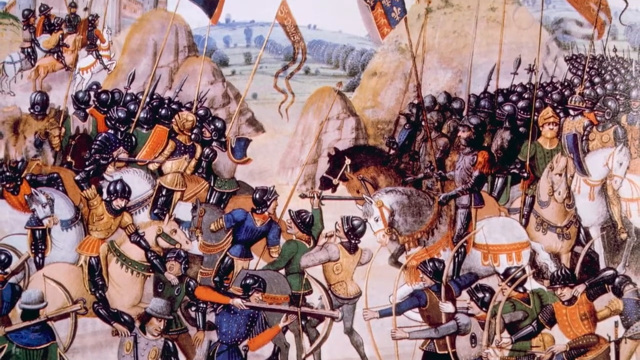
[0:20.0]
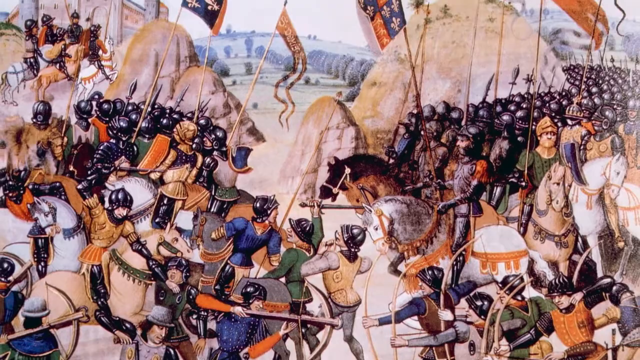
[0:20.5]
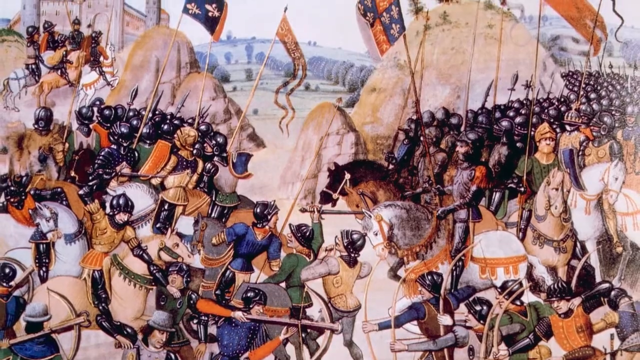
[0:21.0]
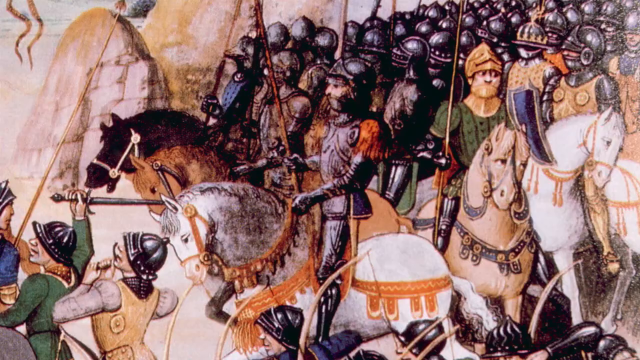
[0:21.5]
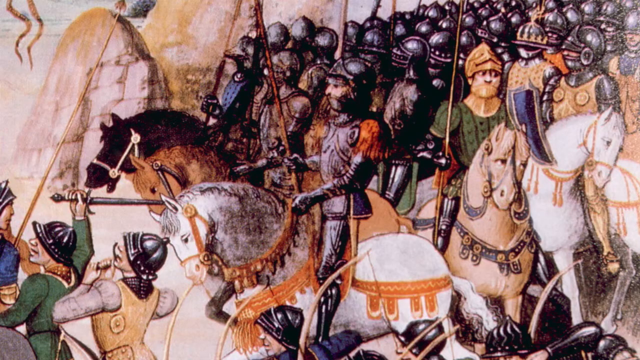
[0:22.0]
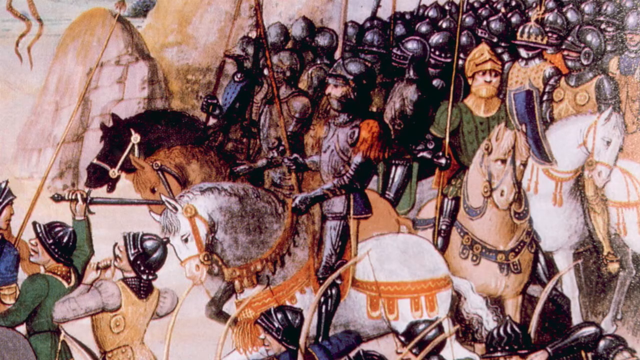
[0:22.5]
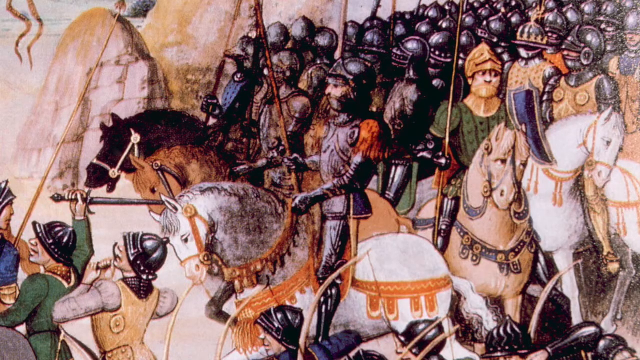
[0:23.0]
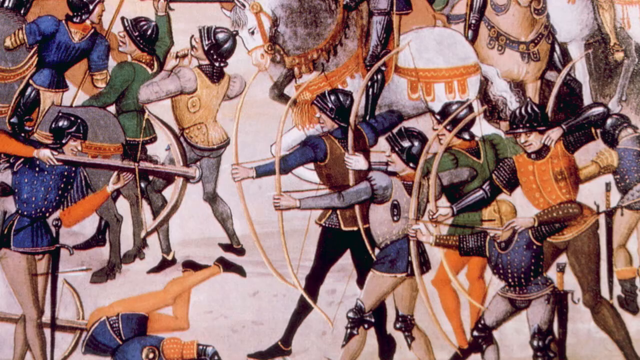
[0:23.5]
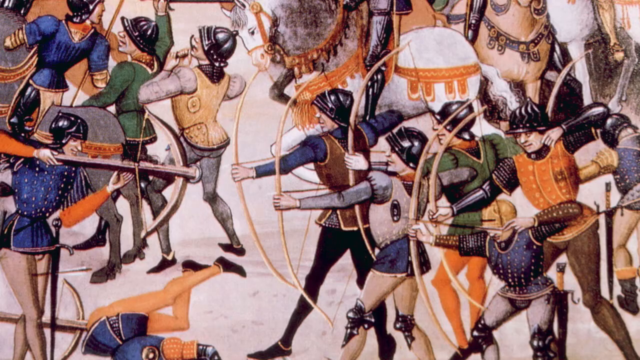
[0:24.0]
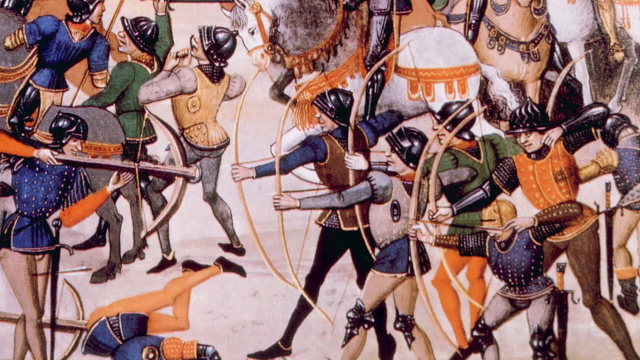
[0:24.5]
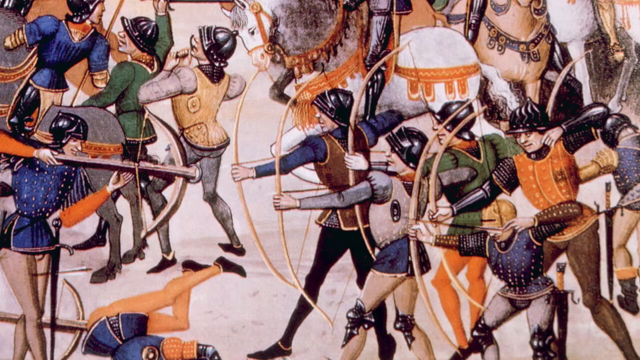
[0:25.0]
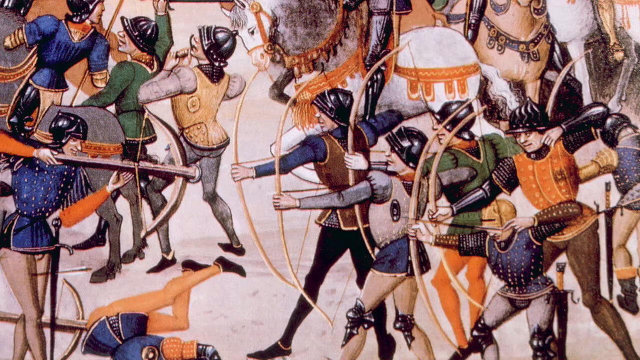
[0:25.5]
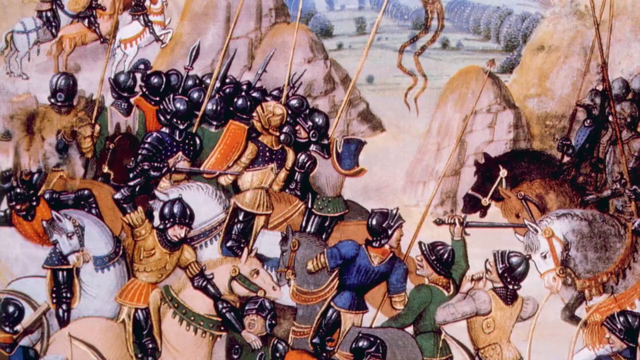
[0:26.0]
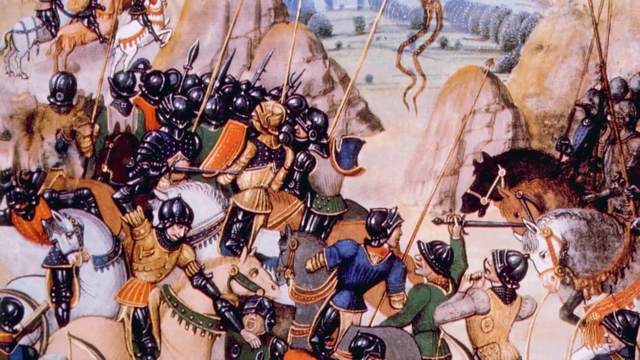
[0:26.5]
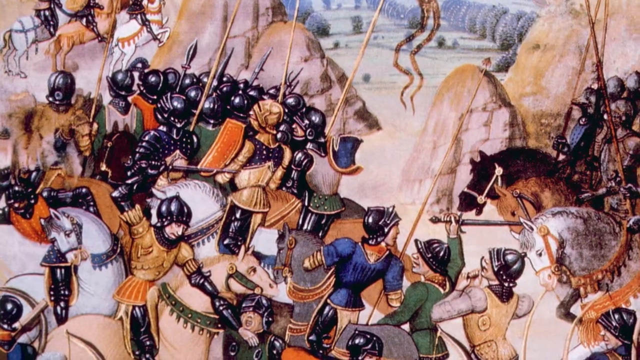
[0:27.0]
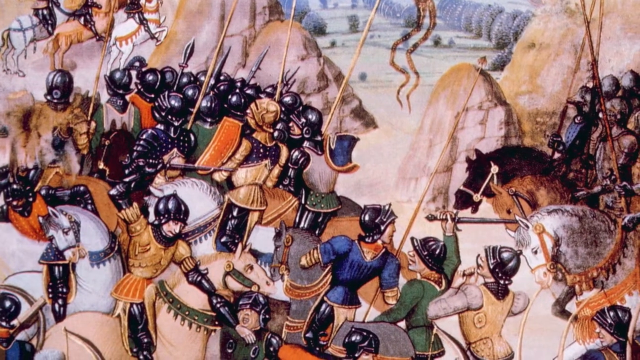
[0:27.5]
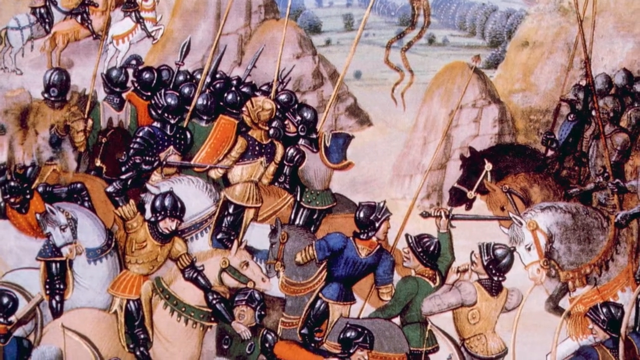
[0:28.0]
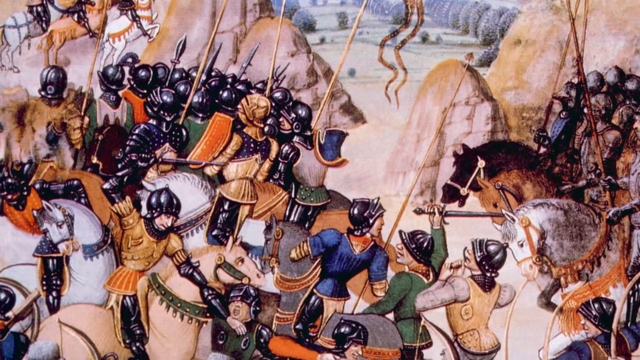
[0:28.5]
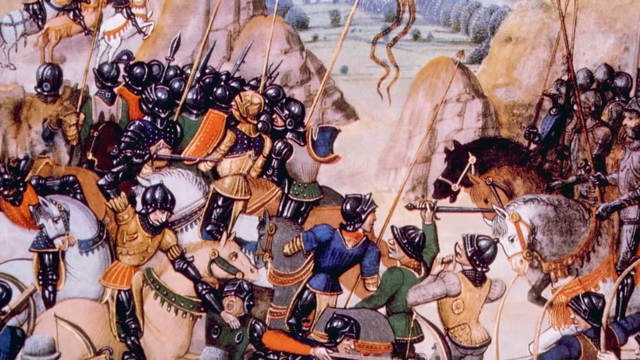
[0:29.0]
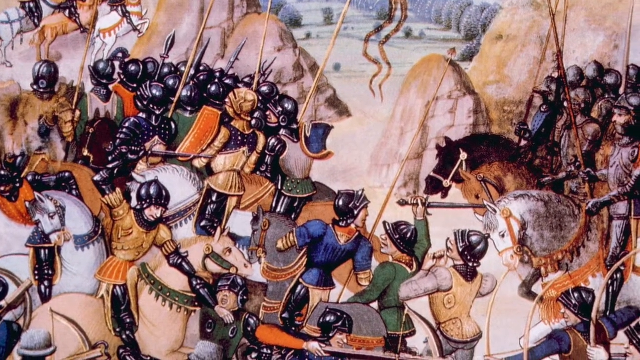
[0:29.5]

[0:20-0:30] A painting of a medieval battlefield shows two opposing sides wearing different colors and armor, made up of a mixture of crossbowmen, longbowmen, horsemen and infantry formations. In the background there is a castle in the top left corner and two large hills next to the armies. The view zooms in on one of the knights leading the army on the right, facing left; he wears blackened armor and is on top of a white horse. It then cuts to a different part of the painting showing multiple men in armor and helmets with their longbows pulled back using their left and right hands, while opposing crossbowmen shoot their crossbows at point-blank range. Next the video focuses on another part of the painting where people seem to be fighting. In the foreground a man on a tan horse grabs the arm of a man on his feet and raises his arming sword in his right hand to strike down.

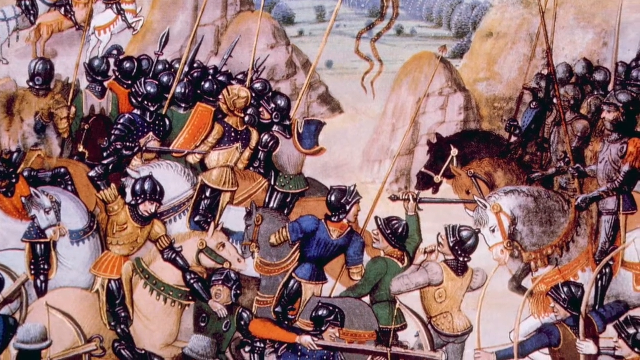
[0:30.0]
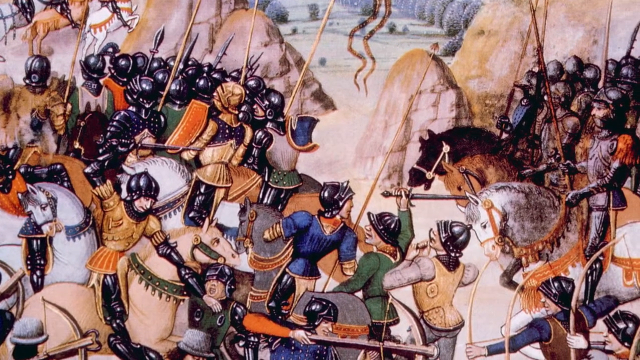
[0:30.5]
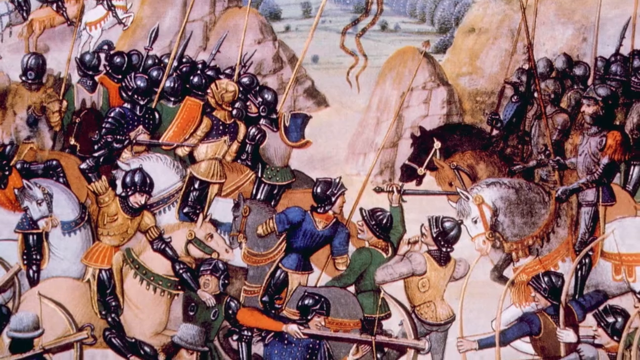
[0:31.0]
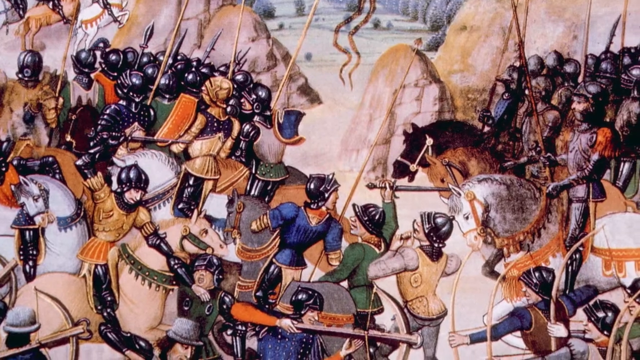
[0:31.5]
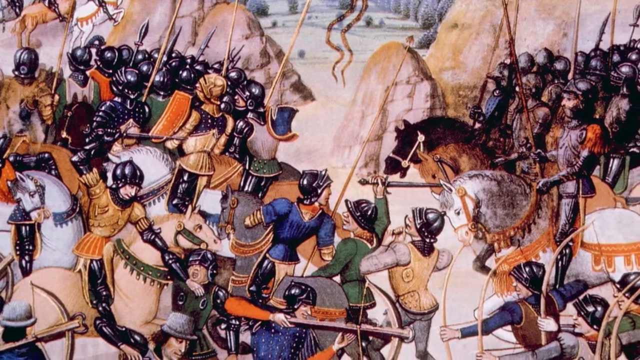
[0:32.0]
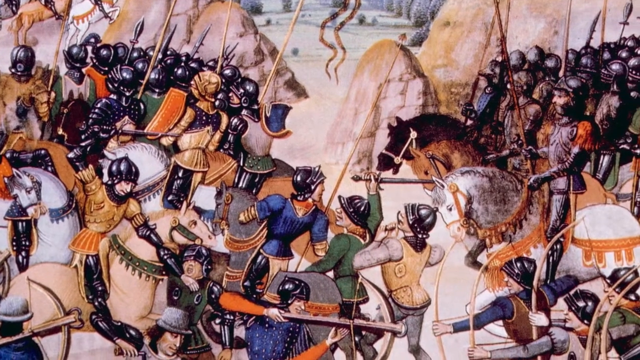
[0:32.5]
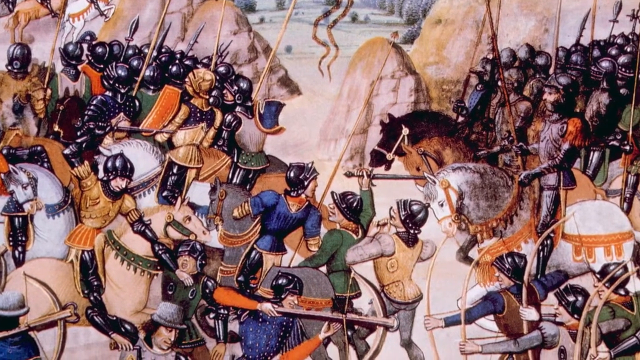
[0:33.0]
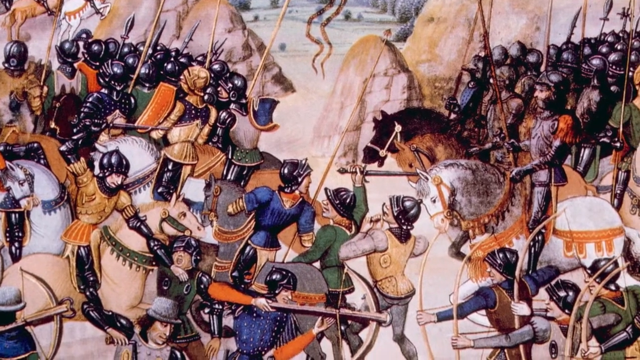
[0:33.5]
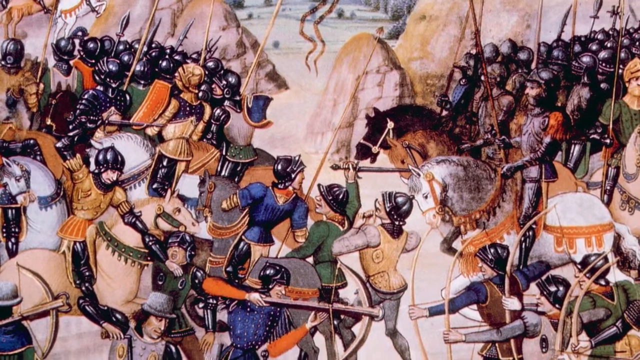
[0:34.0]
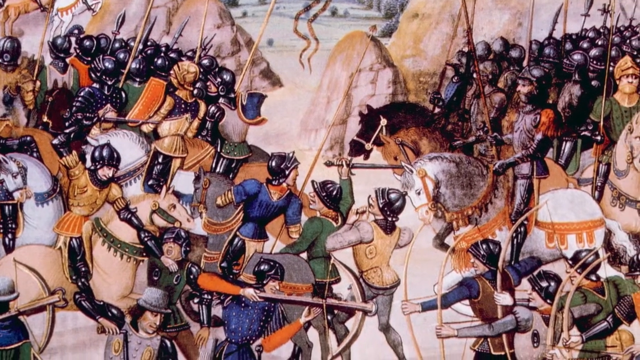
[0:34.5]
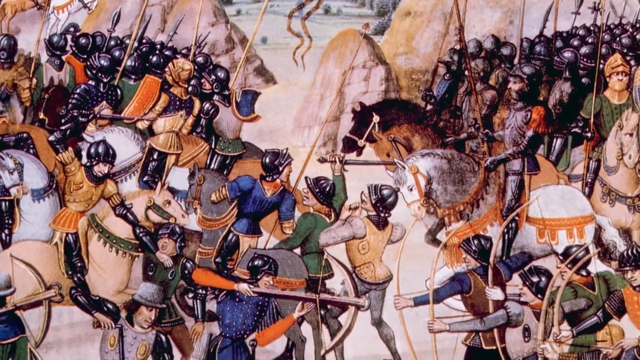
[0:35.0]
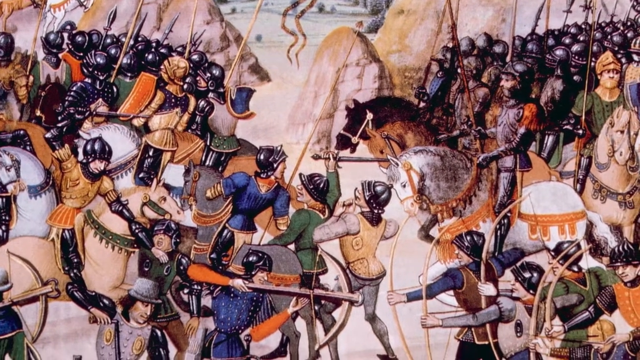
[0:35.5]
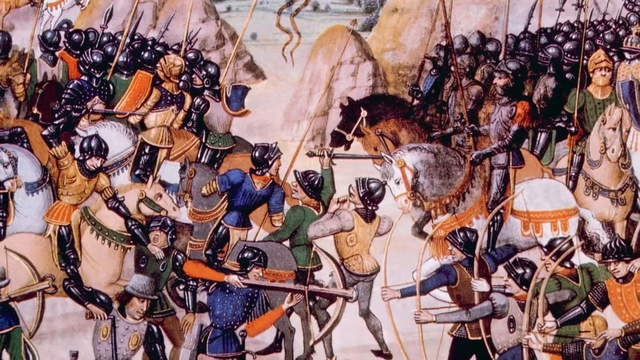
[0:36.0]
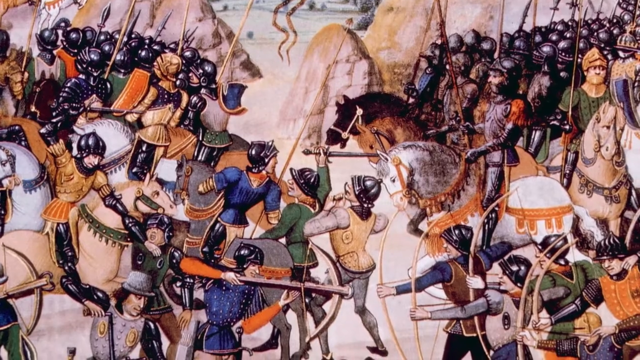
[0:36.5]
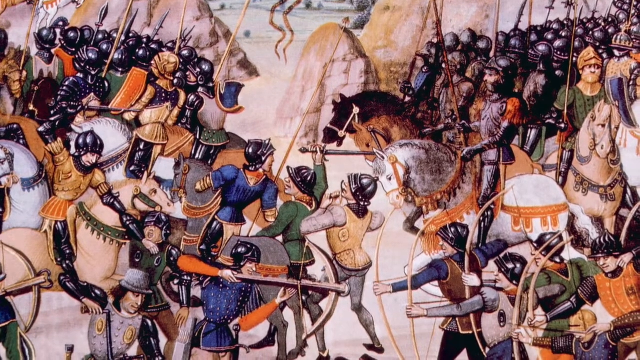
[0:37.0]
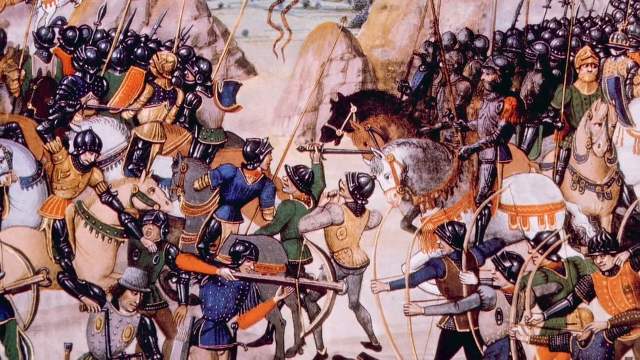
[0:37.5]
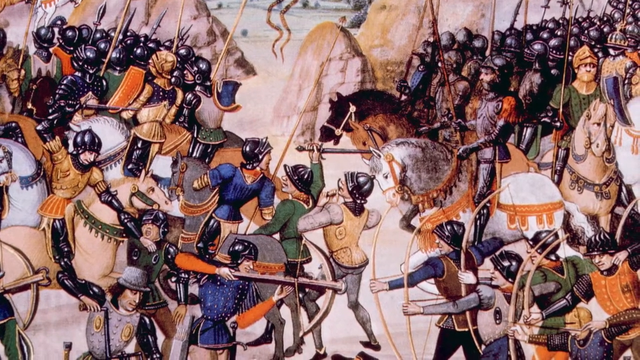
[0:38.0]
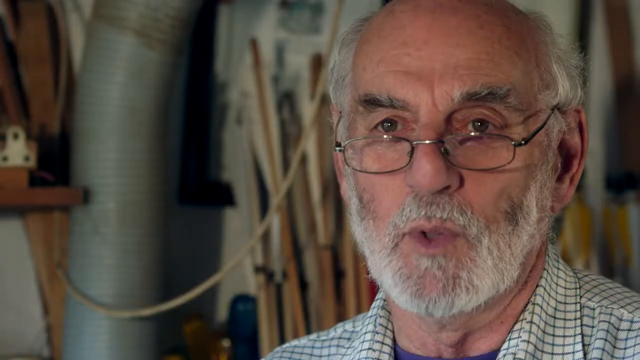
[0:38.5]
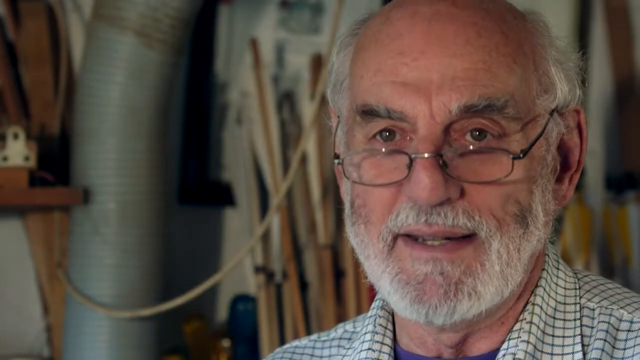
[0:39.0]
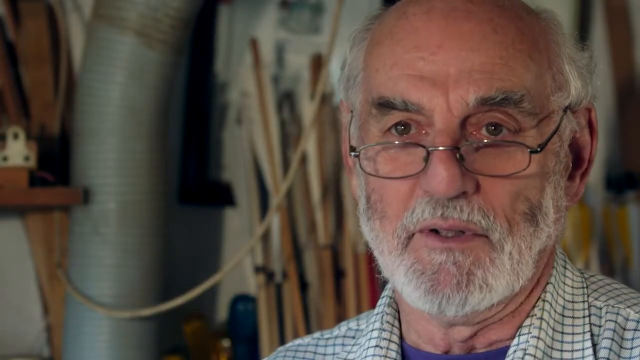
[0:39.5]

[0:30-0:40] A medieval battle scene shows multiple men moving from right to left, seemingly marching toward a distant castle. In the foreground multiple people fight on opposing sides, those on the left facing right and those on the right facing left. The camera slowly zooms out, showing various knights and soldiers, some fighting each other with swords and others opposing each other with crossbows and longbows. The video then cuts to an old, bald man with gray hair on either side of his head, a gray beard and mustache, and metal-rimmed glasses on the bridge of his nose that he looks over. He is visible only from the neck up and gives an interview toward the camera, his head on the right side of the screen, as text appears labeling him as "Richard Head".